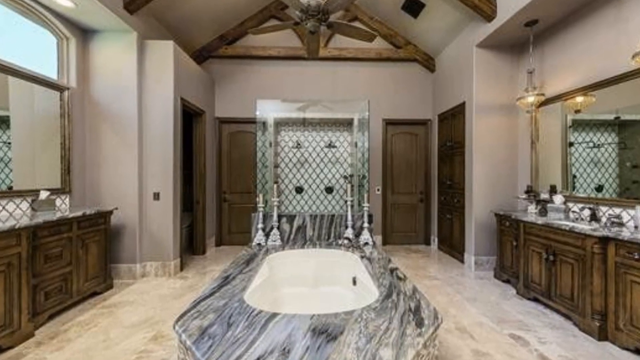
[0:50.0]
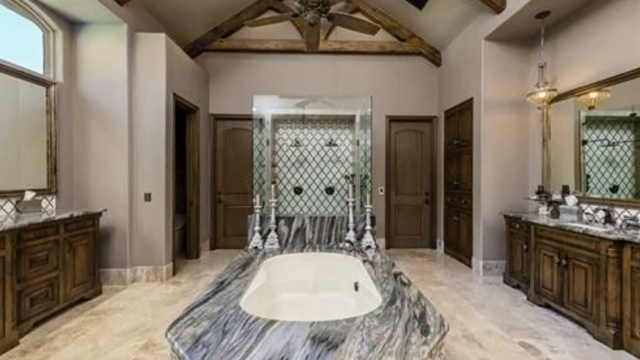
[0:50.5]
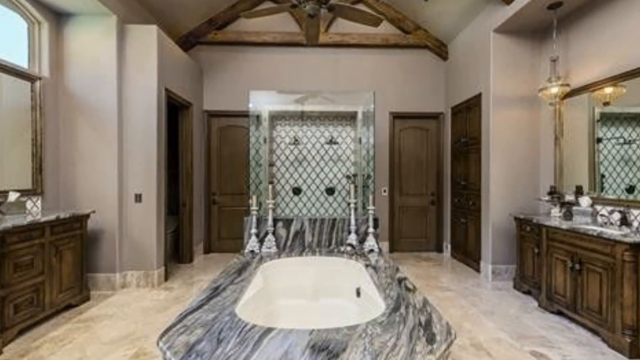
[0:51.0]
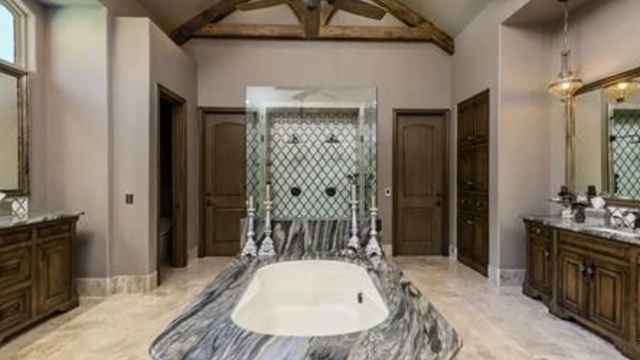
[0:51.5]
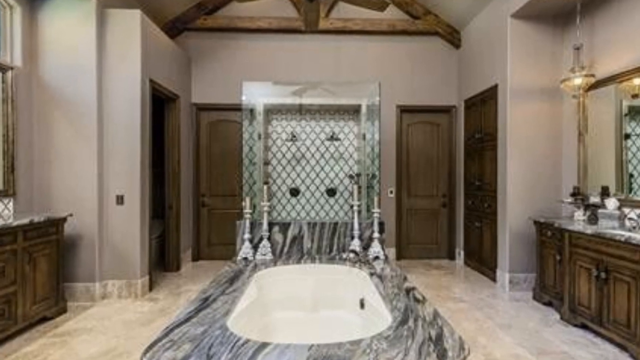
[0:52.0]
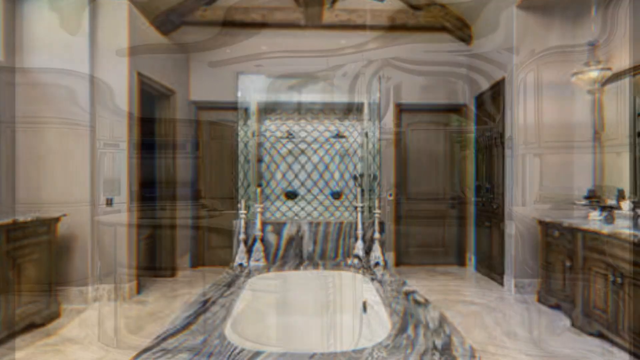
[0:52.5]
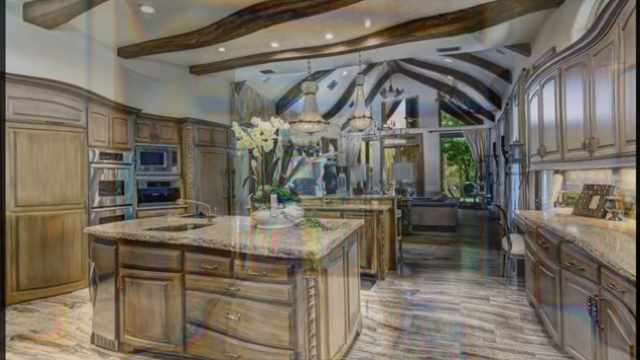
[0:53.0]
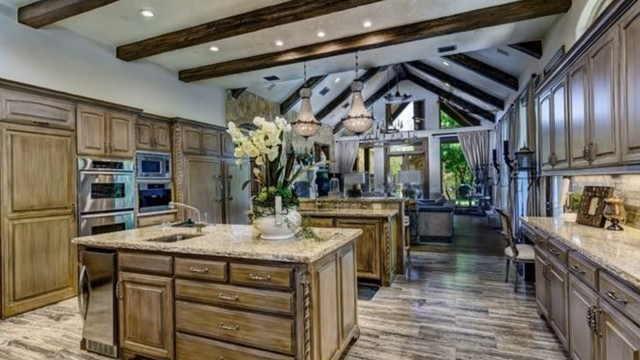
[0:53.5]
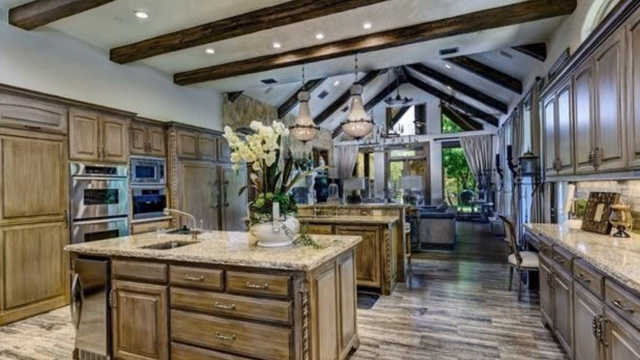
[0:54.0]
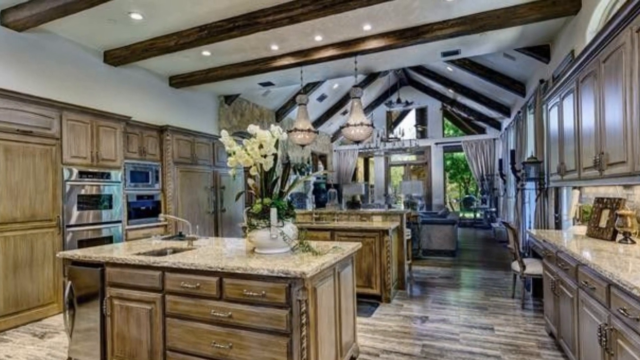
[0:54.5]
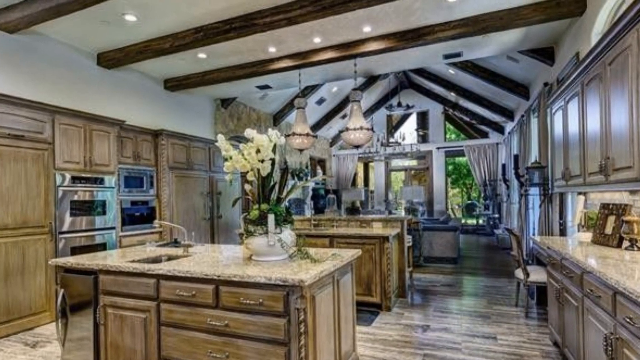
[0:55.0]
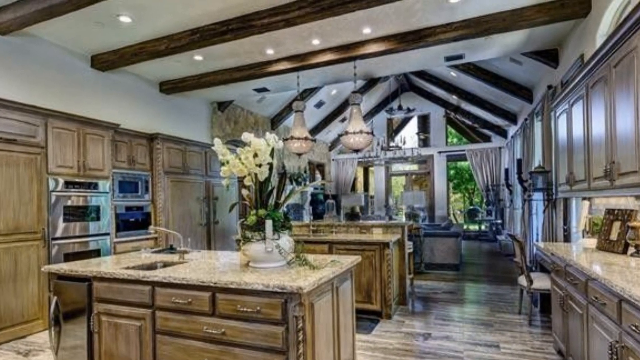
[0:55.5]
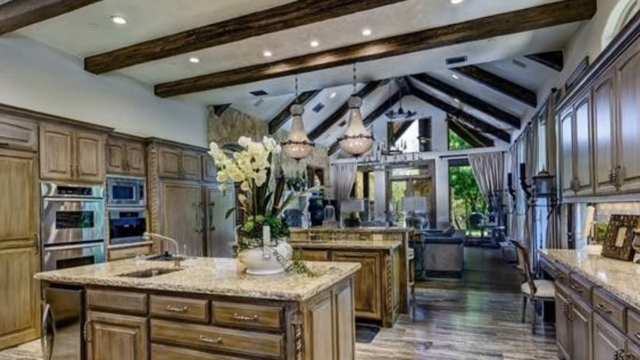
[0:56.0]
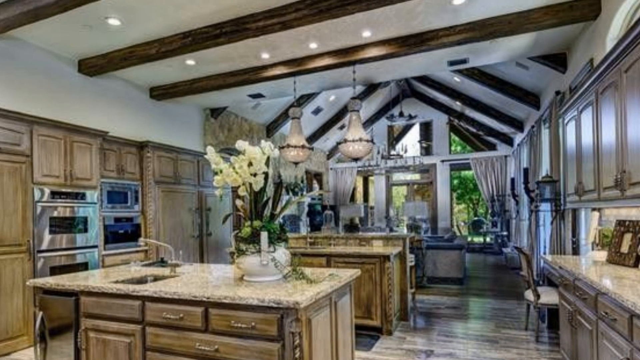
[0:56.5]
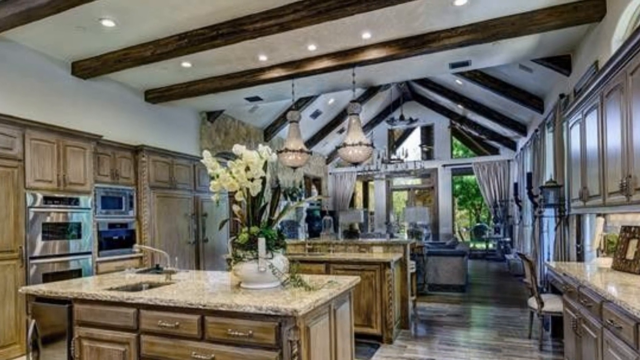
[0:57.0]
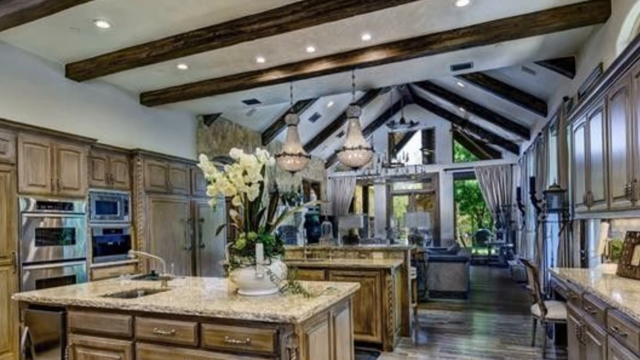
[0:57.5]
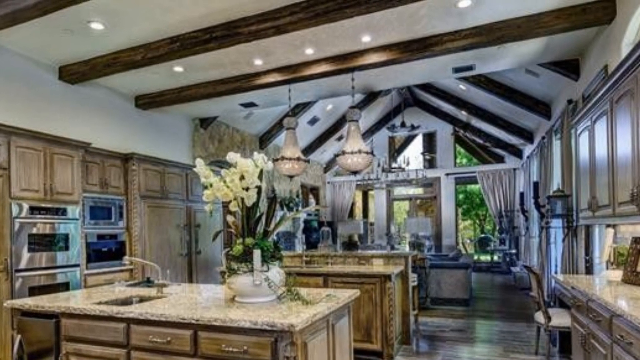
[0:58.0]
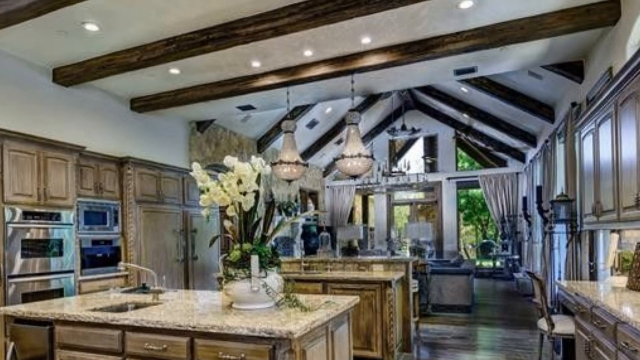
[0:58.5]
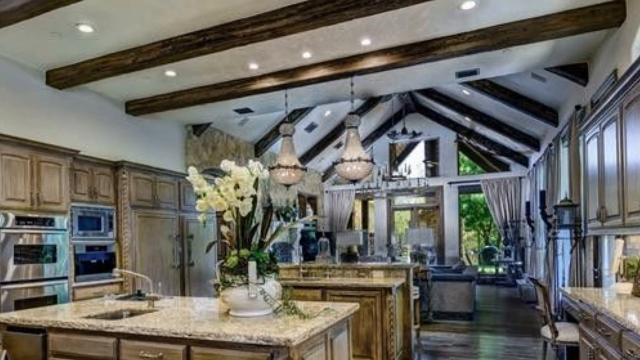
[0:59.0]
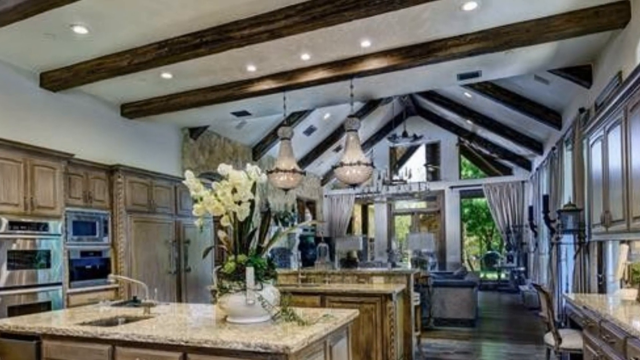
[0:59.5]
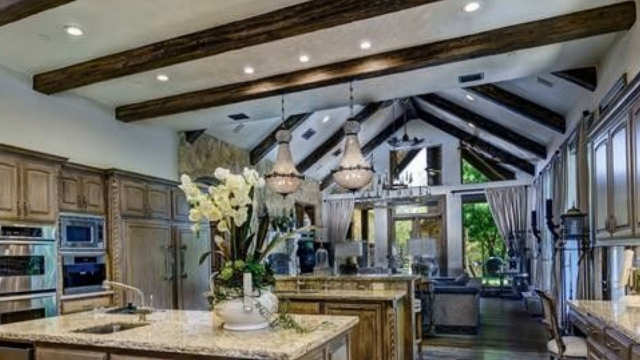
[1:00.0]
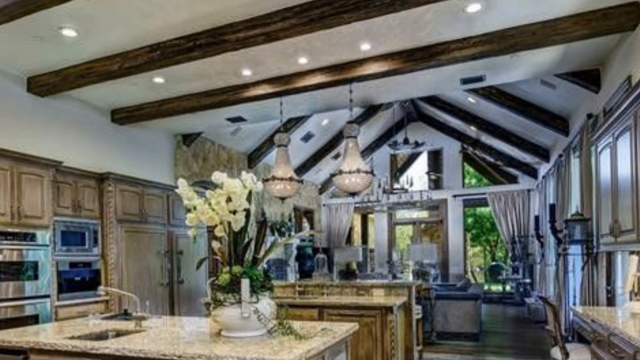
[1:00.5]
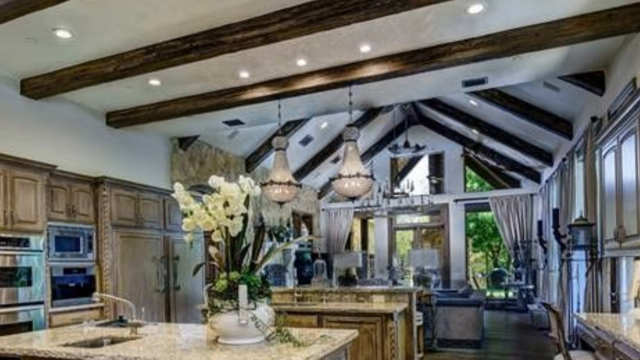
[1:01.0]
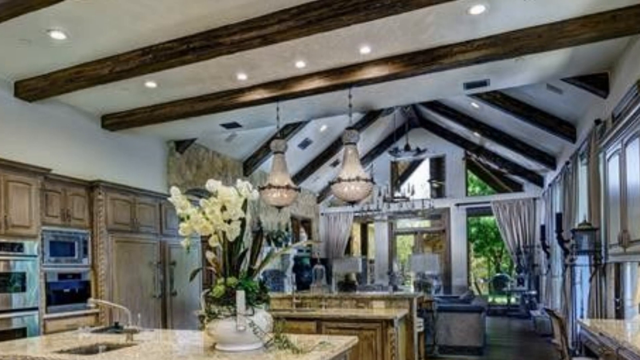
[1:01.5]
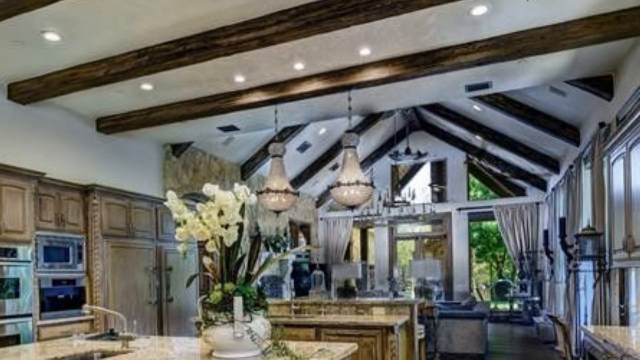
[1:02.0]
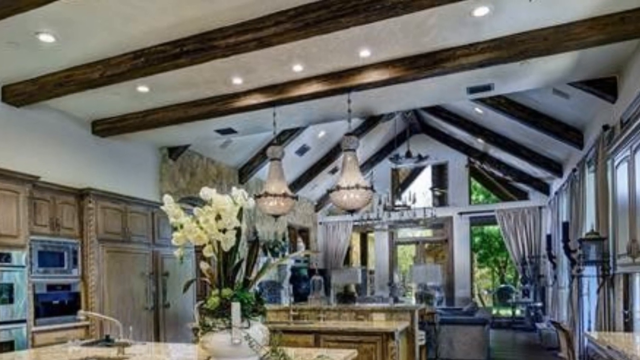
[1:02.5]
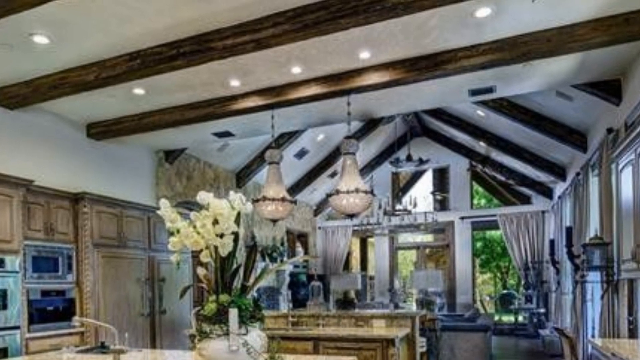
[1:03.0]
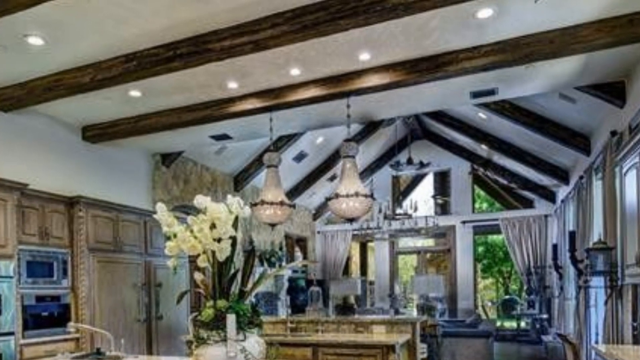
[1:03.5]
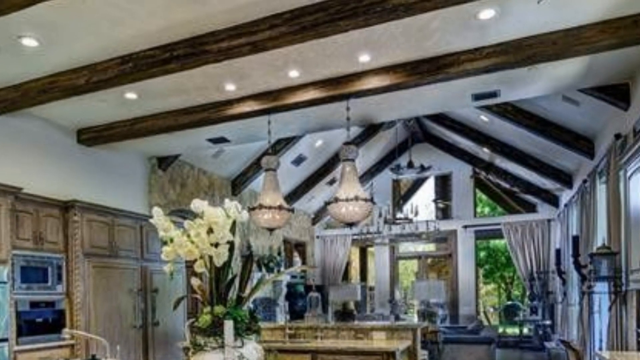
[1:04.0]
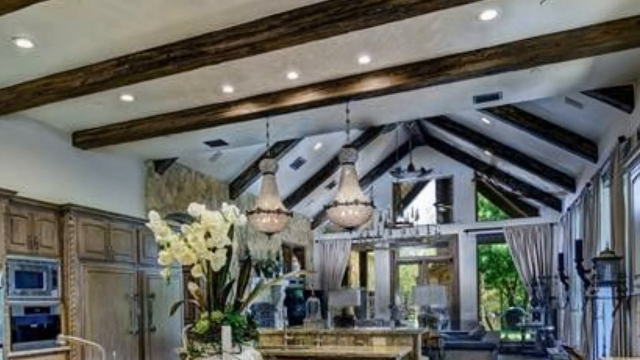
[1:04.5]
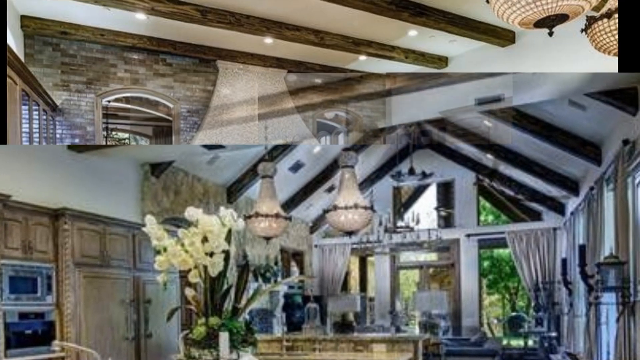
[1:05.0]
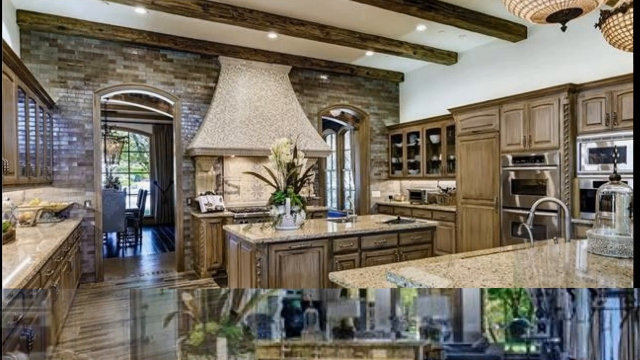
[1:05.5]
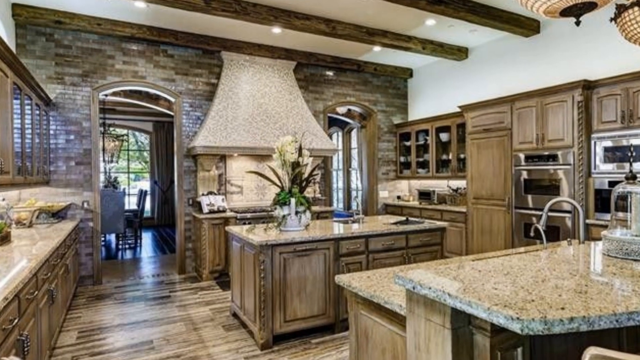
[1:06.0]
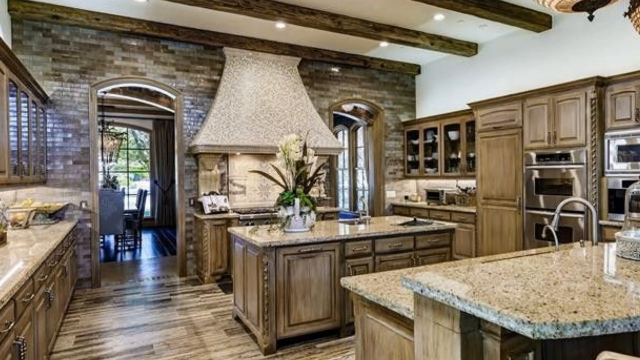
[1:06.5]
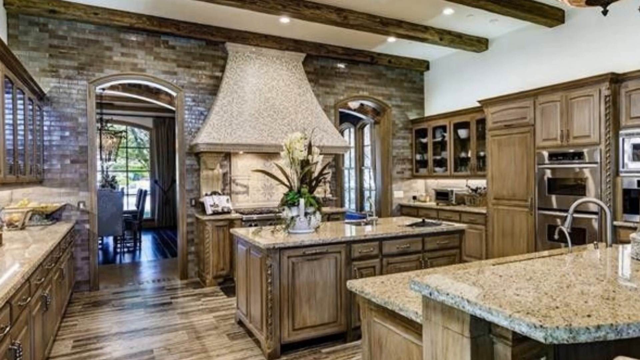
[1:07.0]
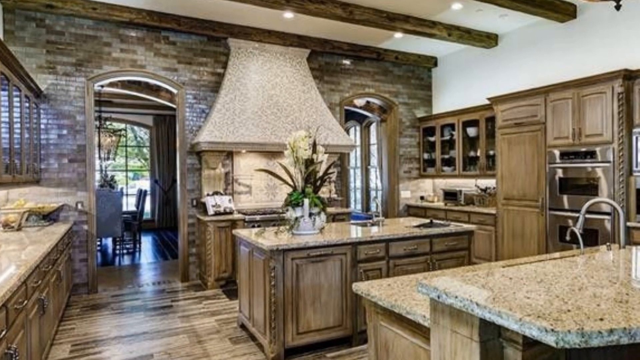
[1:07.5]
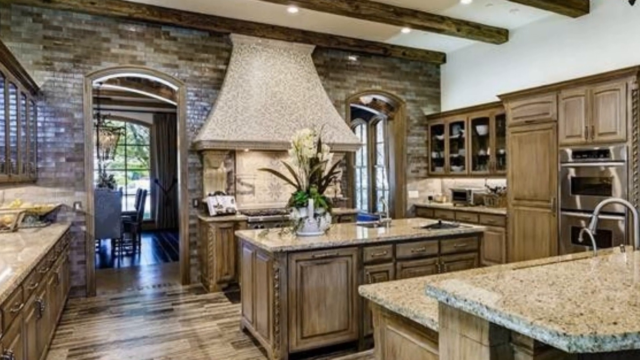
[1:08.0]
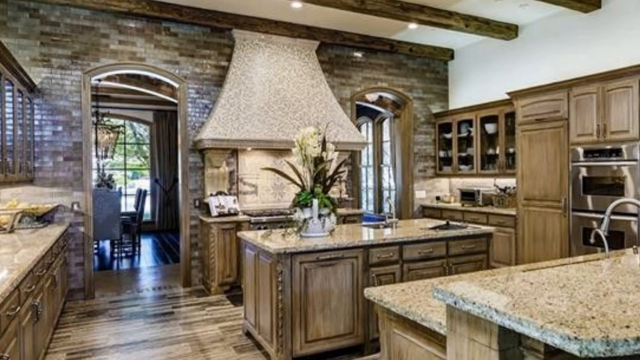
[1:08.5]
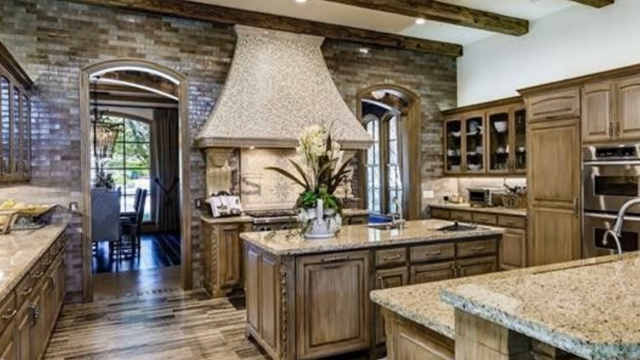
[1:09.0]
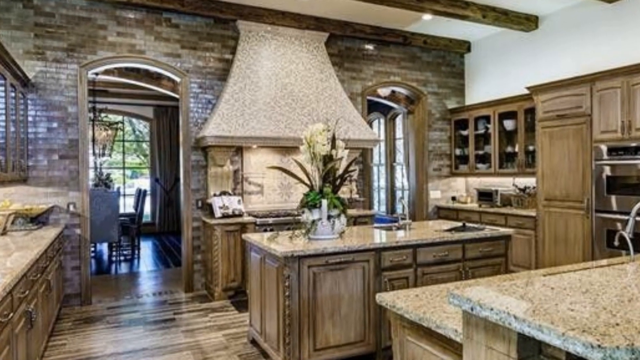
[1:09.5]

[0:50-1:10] A bathroom is shown, with the bath in the middle of the room, a few different ways in or storage cabinets apparently for holding towels, and his and her sinks on opposite sides of the room. It looks very grand and quite modern. The view then moves to the kitchen, with the zoom going off at seemingly random angles. The kitchen is very big, with two islands that apparently both have sinks, along with sets of drawers. There are many stainless steel appliances among wooden cabinetry and cupboards, and flowers in plants and vases are dotted about. The camera does a slow zoom into the kitchen, and then the opposite angle of the kitchen is shown, looking out to the garden area, with more light.